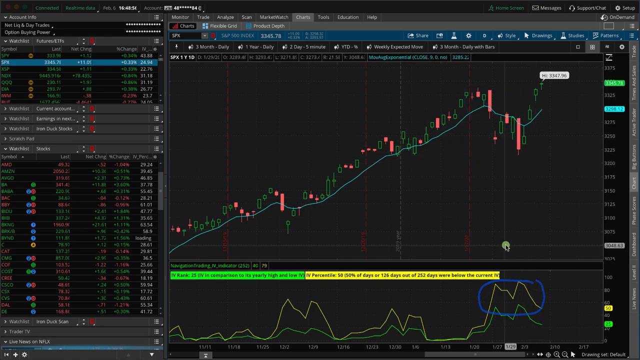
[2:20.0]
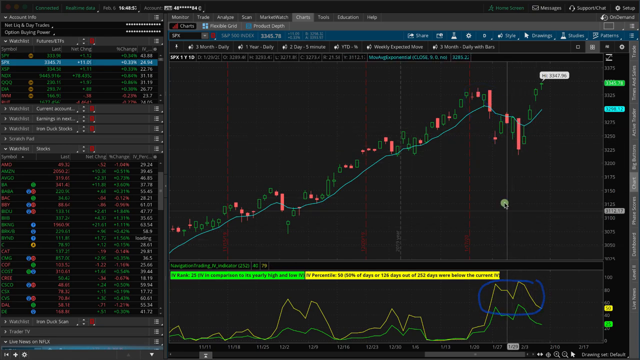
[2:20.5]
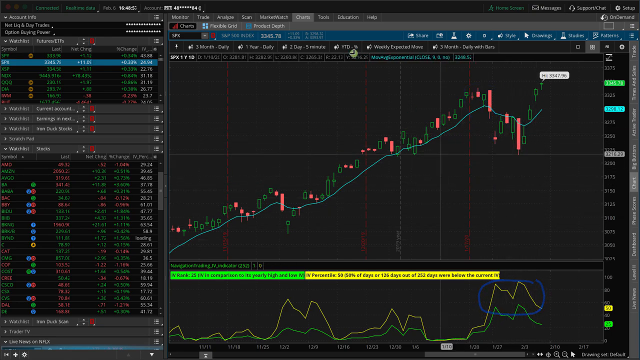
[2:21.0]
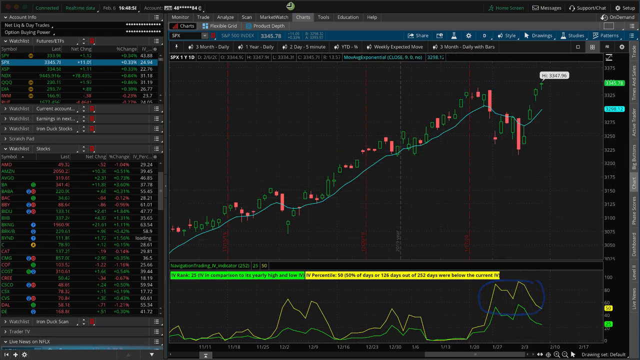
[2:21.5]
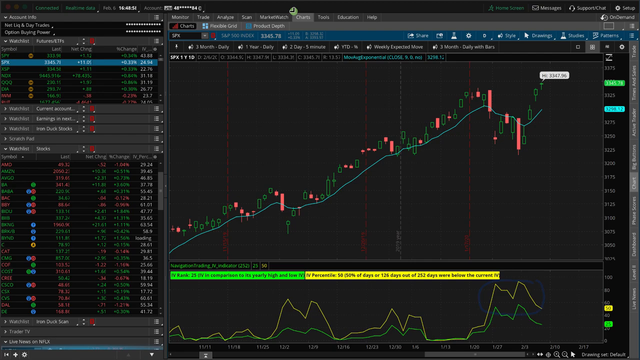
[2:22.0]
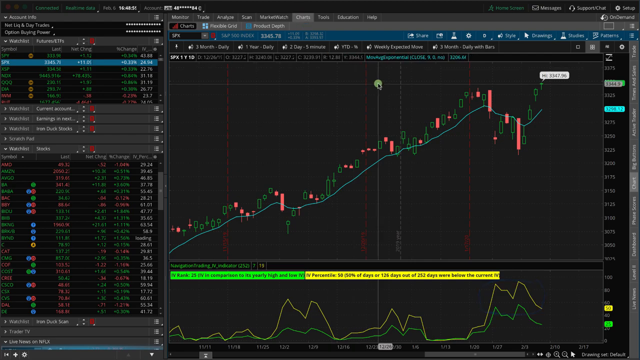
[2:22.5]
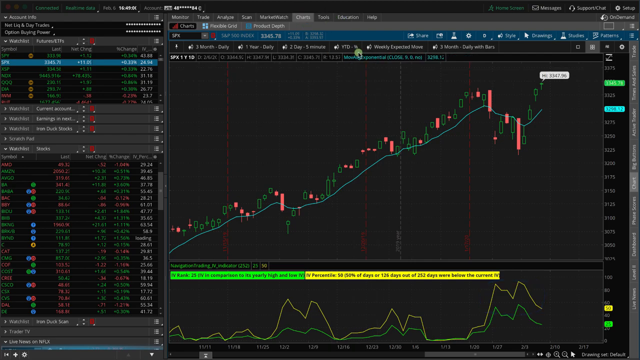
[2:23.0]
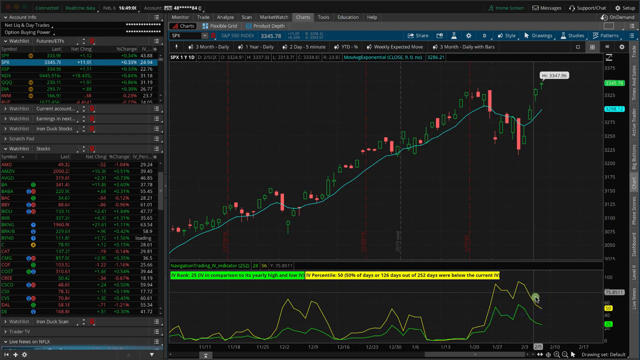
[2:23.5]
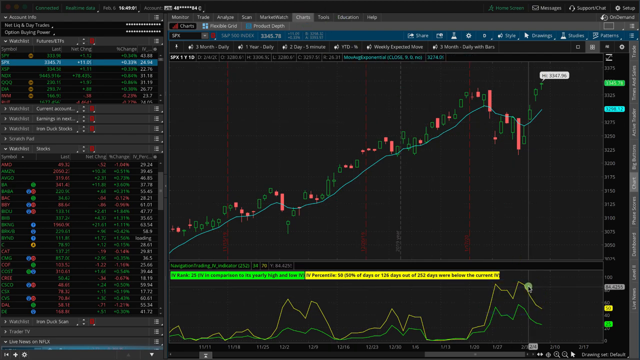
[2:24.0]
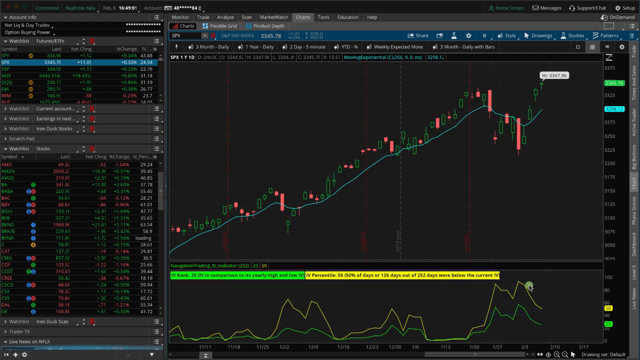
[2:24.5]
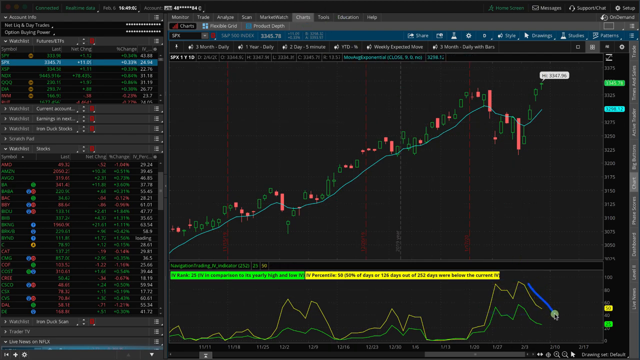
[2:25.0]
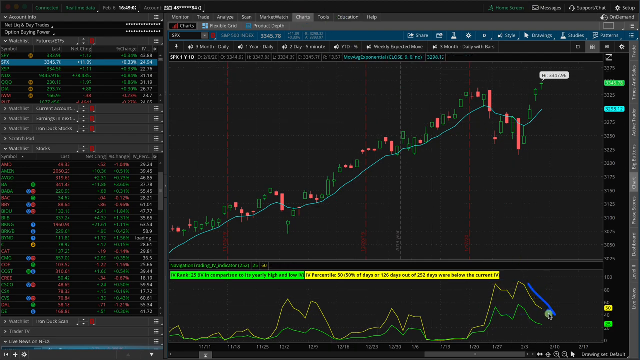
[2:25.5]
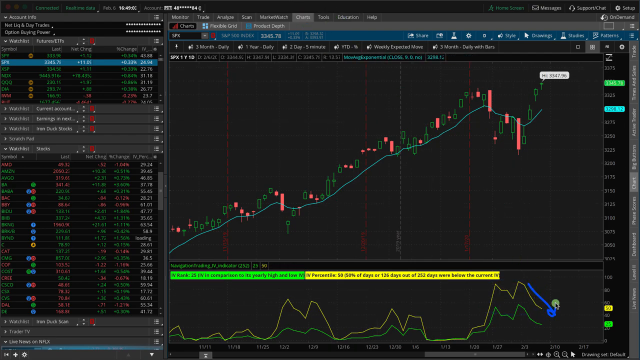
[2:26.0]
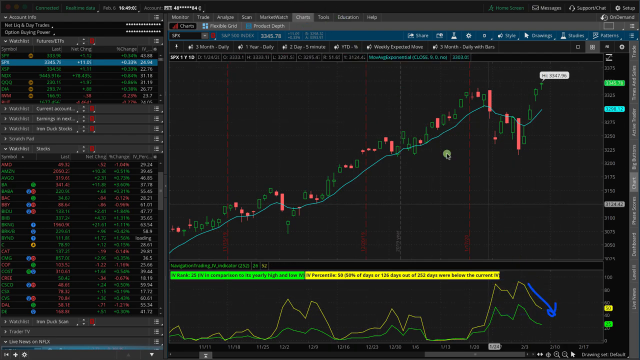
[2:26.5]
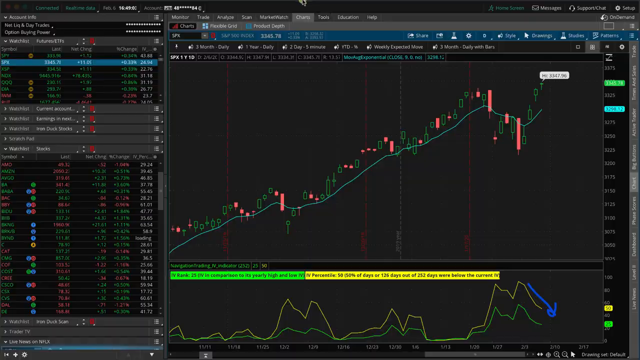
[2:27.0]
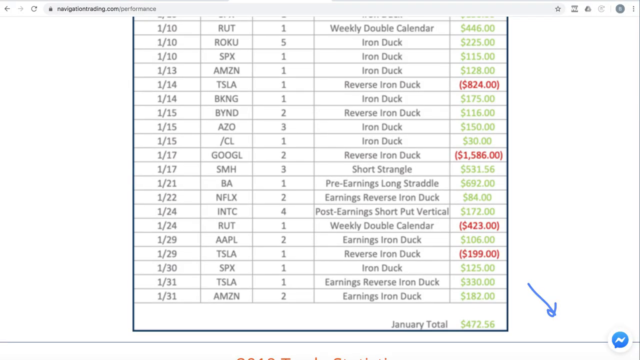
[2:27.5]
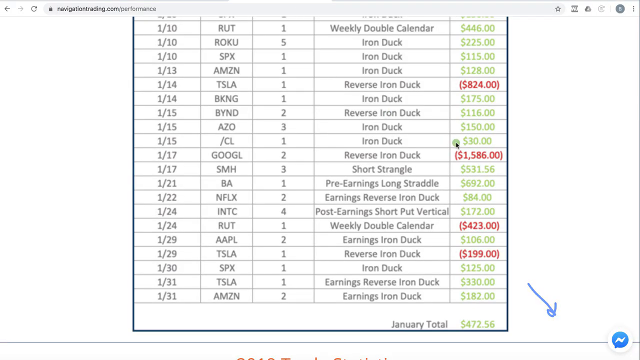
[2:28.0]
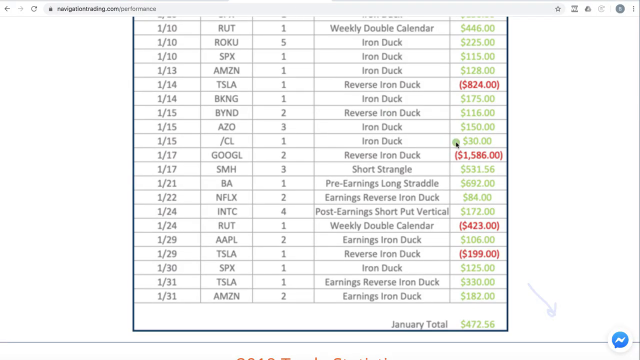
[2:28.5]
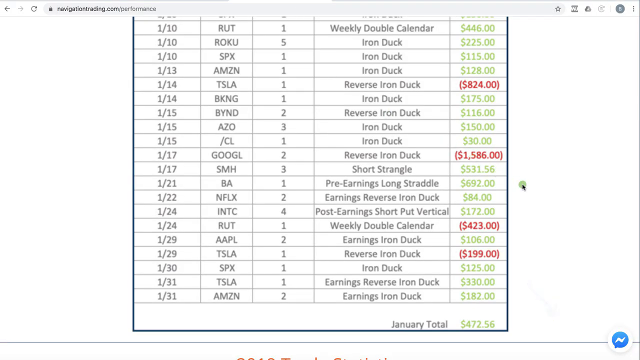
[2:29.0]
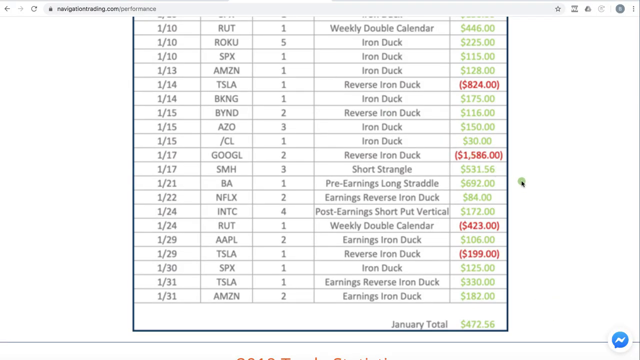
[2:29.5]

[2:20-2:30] A similar report shows trades in green or red sections depending on whether they are positive or negative. A line slowly creeps upward toward profit, with a mix of green and red areas along it.